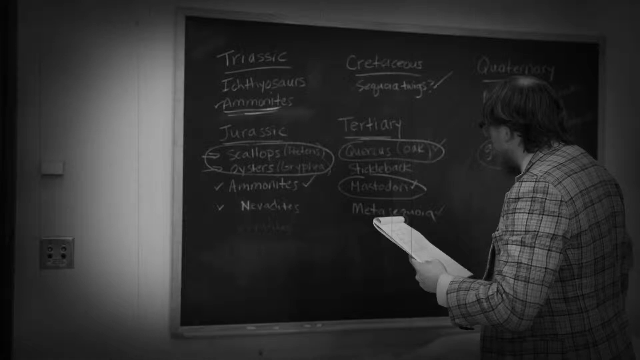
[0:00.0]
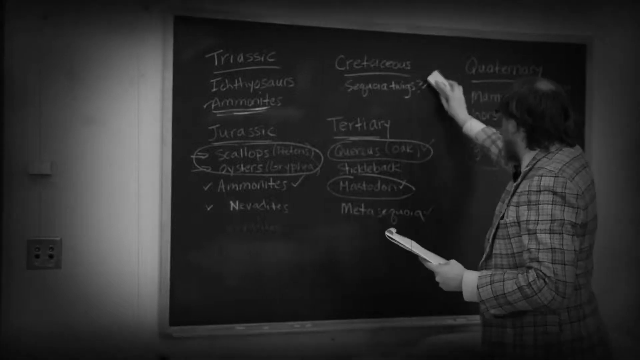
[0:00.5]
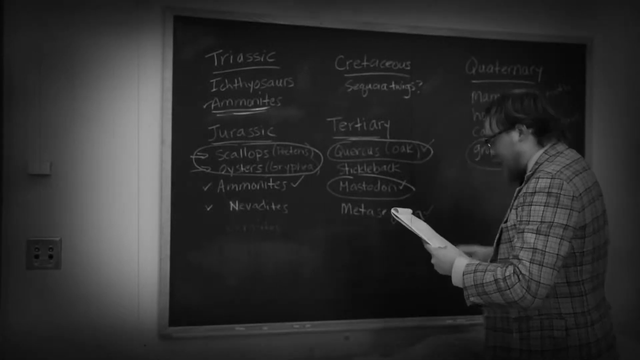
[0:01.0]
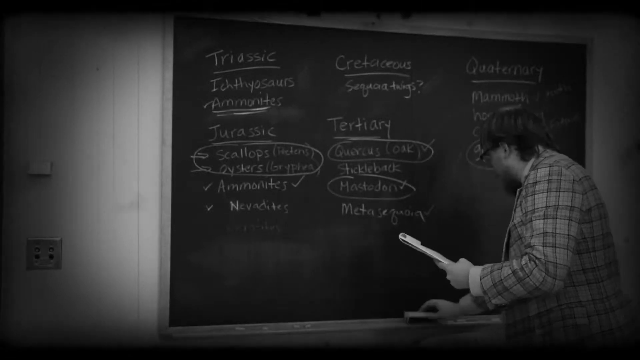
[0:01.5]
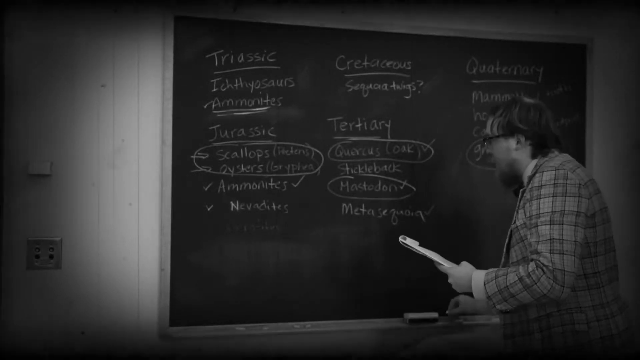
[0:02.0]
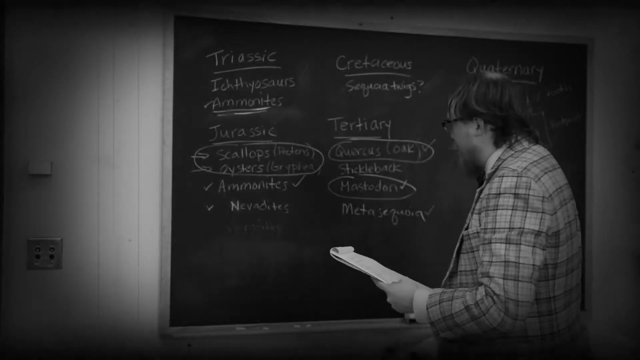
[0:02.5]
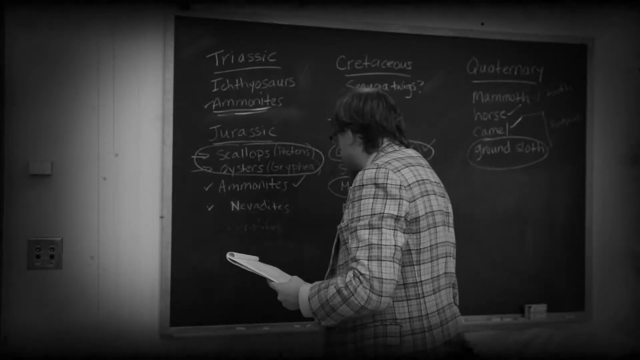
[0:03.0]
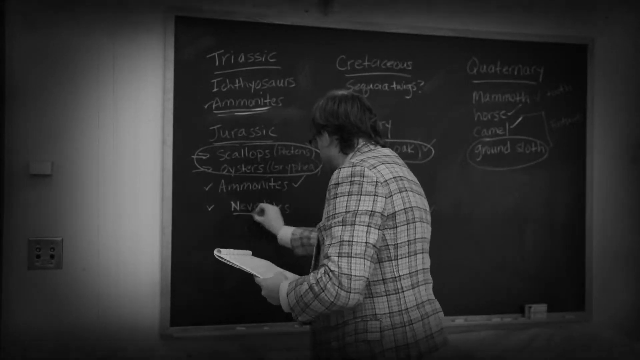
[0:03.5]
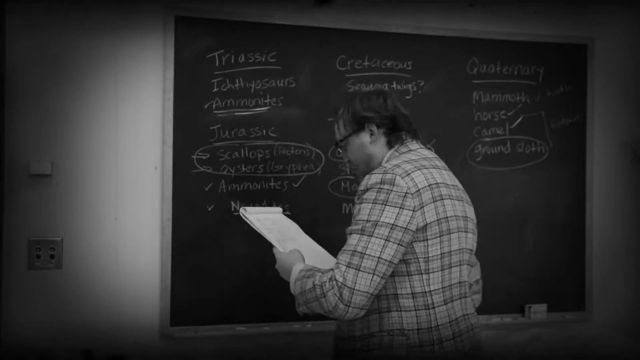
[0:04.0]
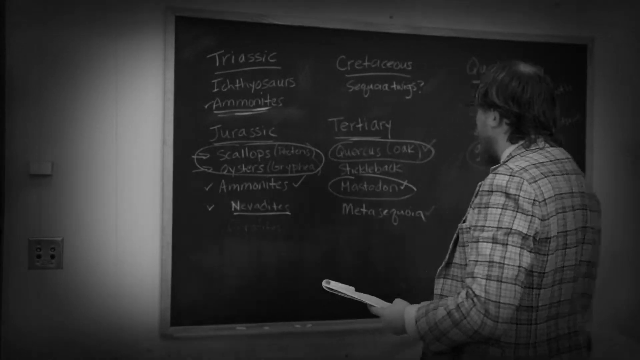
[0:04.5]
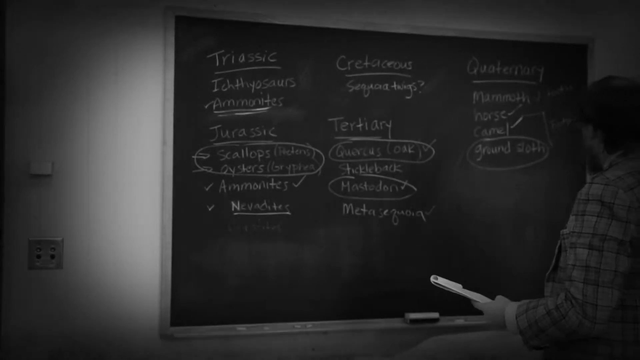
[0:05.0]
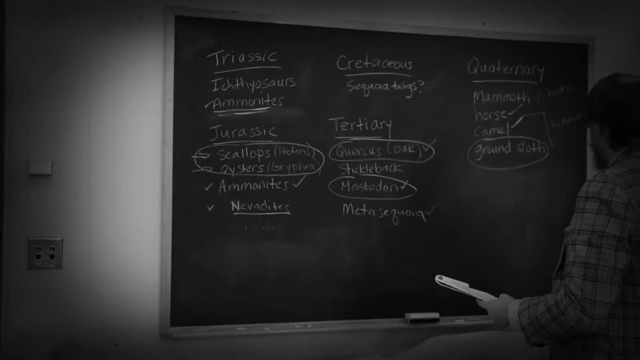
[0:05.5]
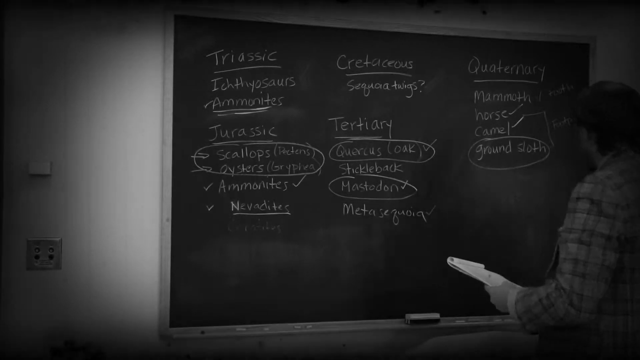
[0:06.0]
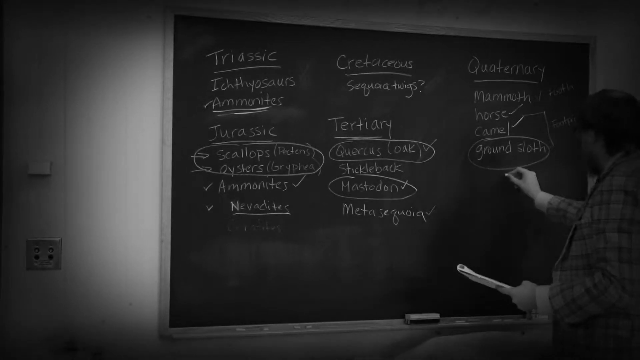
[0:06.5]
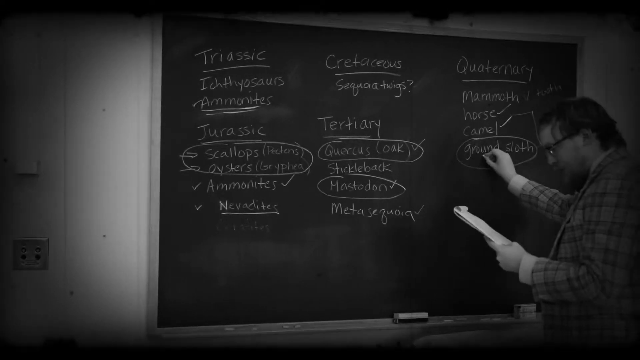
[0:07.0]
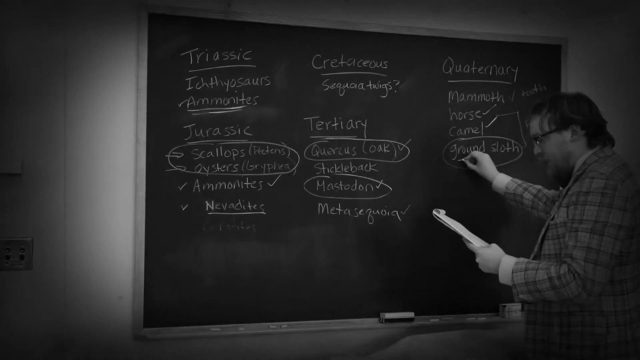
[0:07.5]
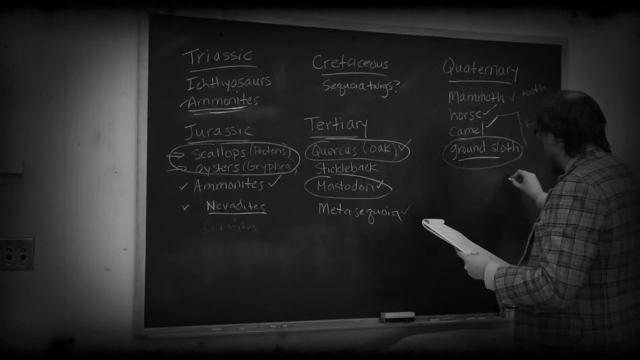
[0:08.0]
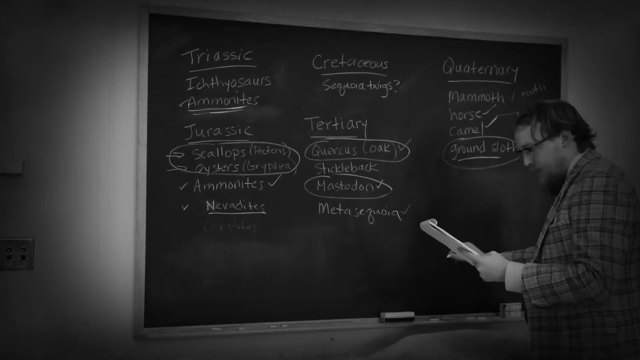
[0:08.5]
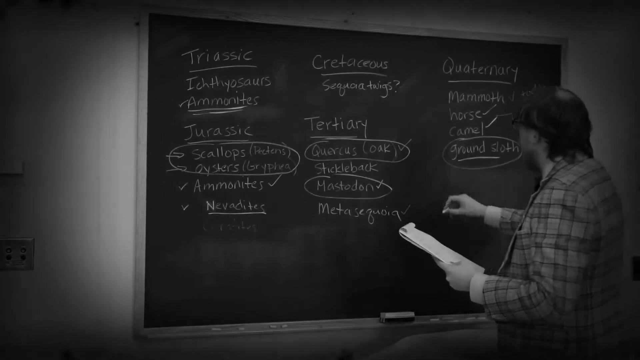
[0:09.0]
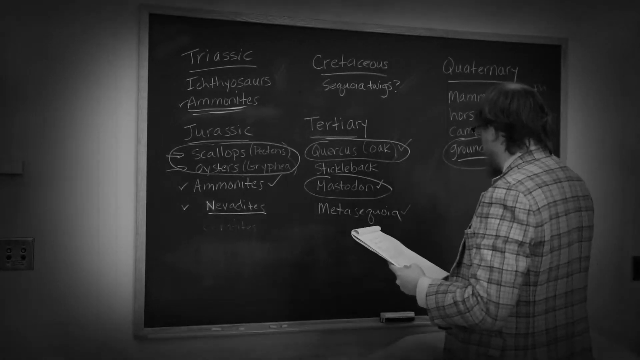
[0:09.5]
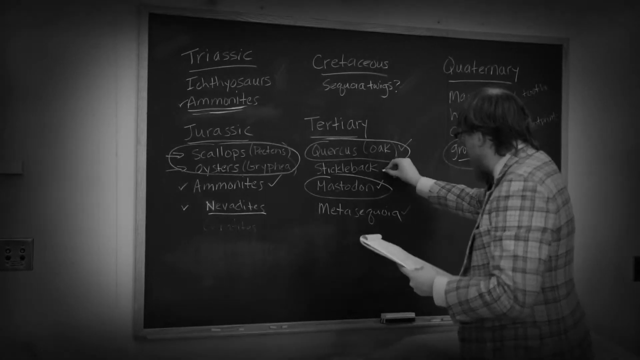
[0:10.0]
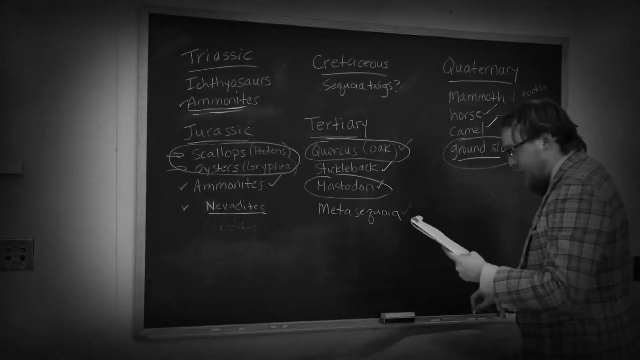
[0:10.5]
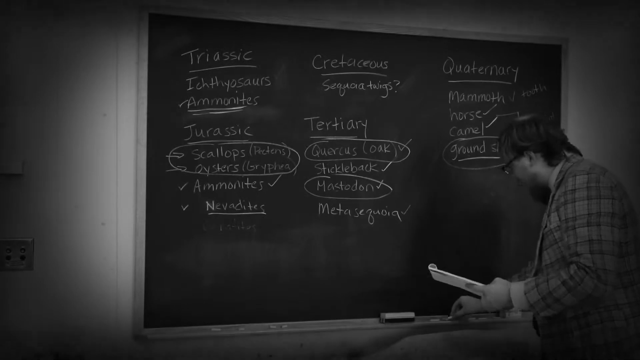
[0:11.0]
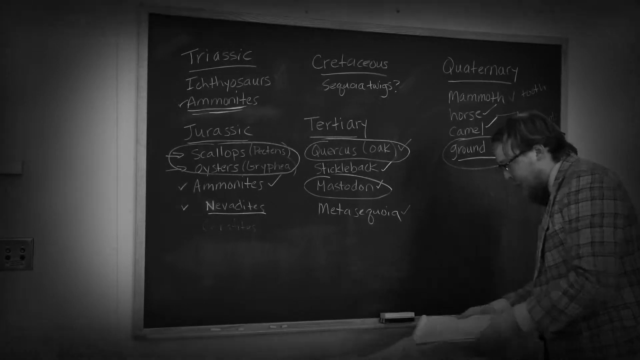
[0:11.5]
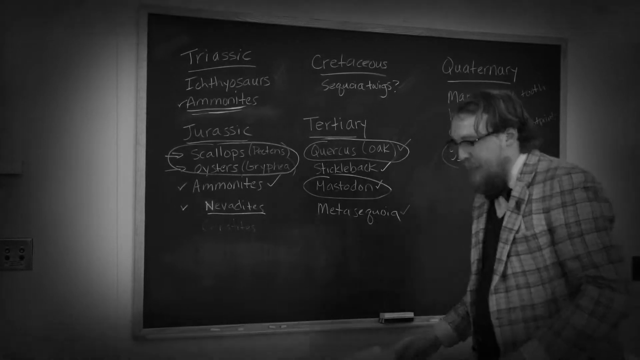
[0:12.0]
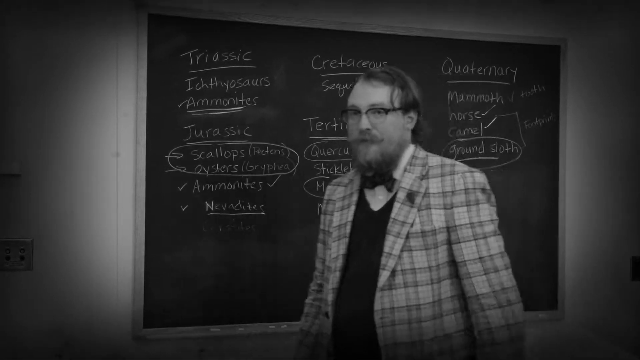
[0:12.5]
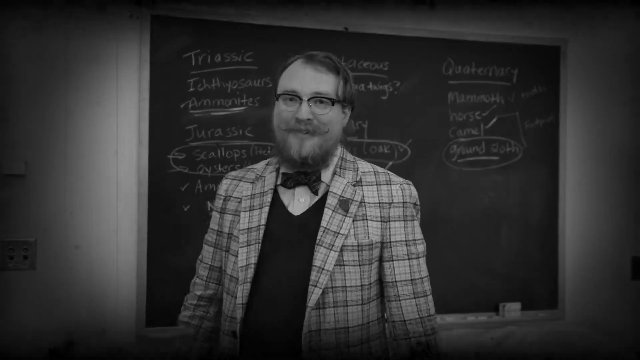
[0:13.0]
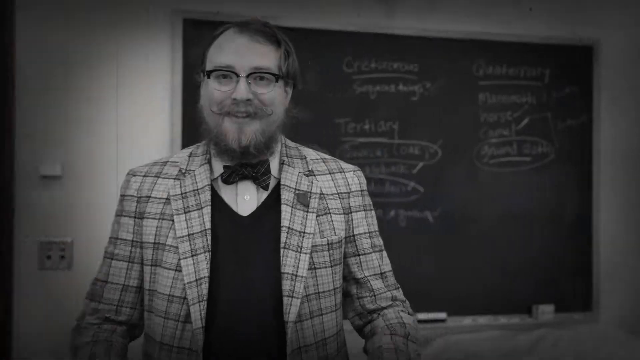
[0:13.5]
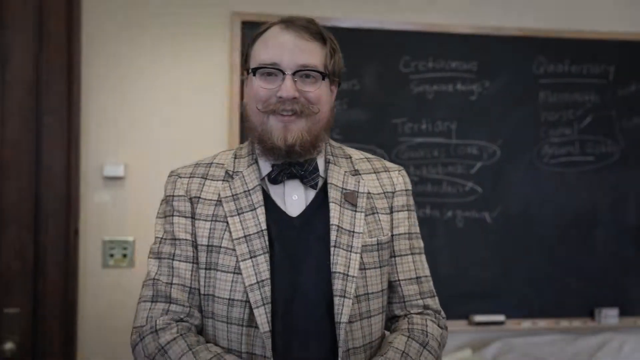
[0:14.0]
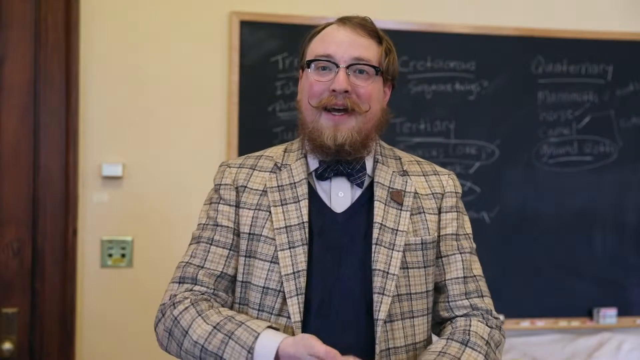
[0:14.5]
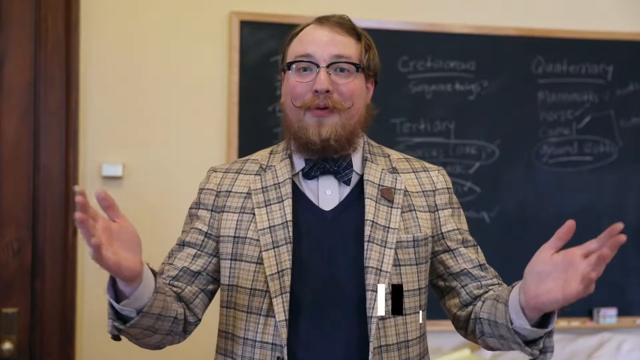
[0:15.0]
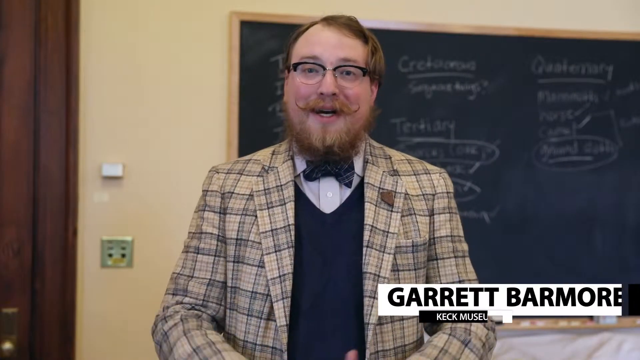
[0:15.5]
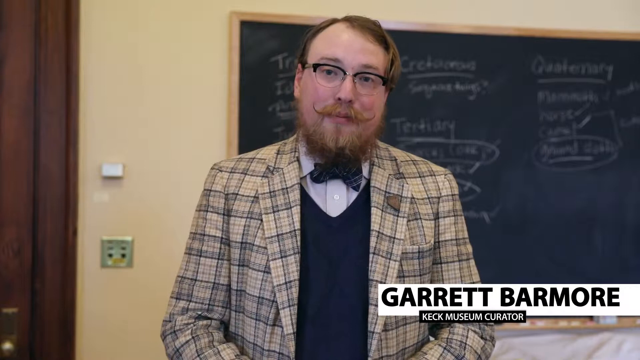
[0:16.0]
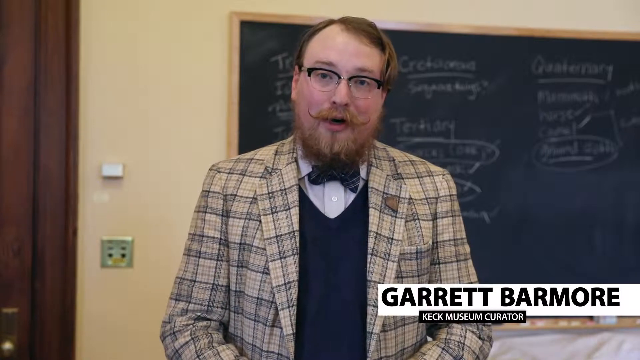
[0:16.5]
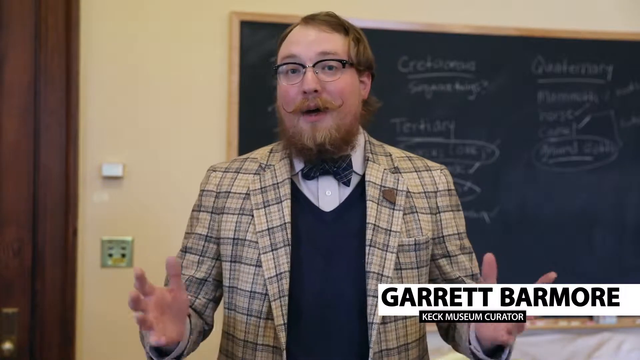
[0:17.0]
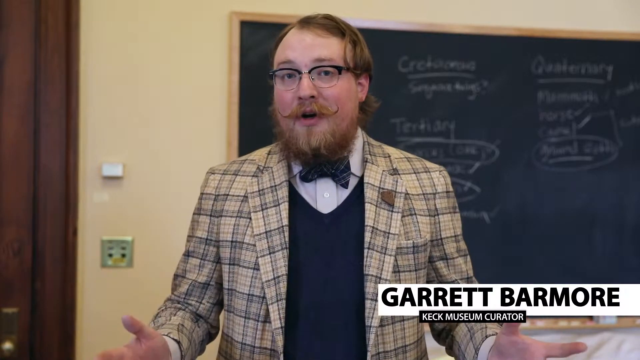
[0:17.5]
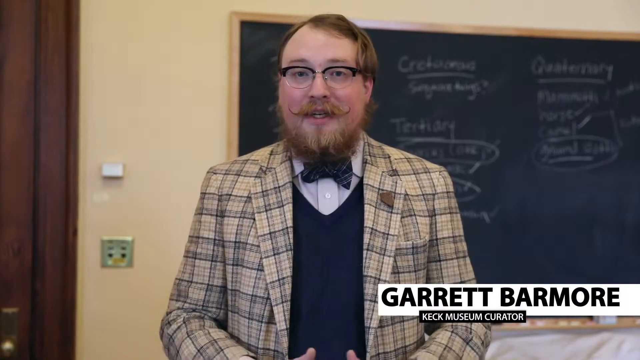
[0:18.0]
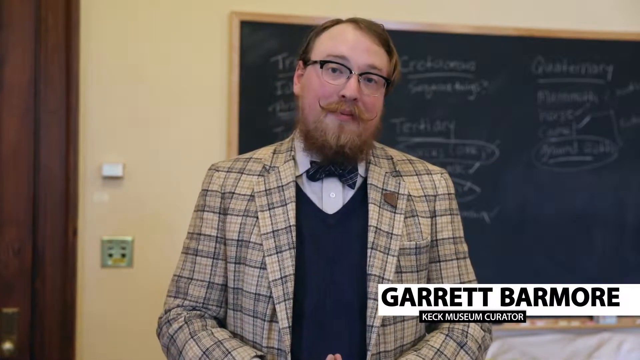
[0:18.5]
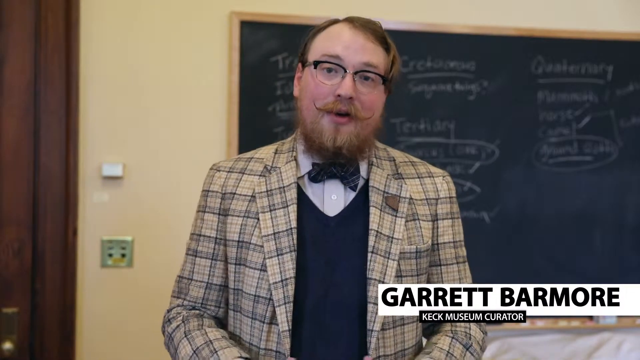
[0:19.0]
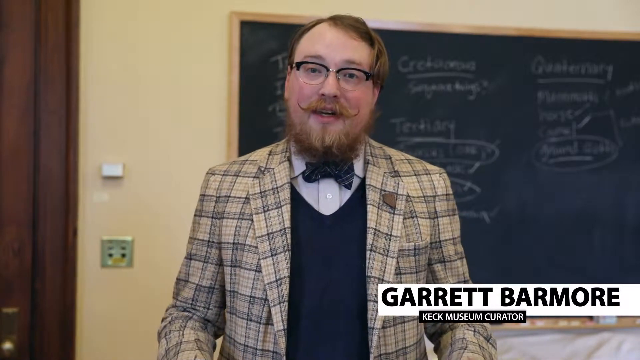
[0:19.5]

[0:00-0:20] The video opens in black and white in a classroom. A blackboard is on the right-hand side of the screen, and on the left-hand side is a wall with an electrical socket and a light switch. On the right stands a middle-aged man in a checked tweed jacket and a white shirt. He wears black-rimmed spectacles and has dark hair with a bald spot on top of his head; he also has a slight beard and black, wavy, shoulder-length hair. He holds a pad of paper in his left hand and writes in chalk on the board with his right. The board already lists species of fossils found in various geological periods. Working from top left clockwise to the right: "Triassic", underlined, with "Ichthyosaurus" and "Ammonites" underlined beneath it; in the middle, "Cretaceous" with a word beginning "Sequioia-" and unclear text beneath it; in the right-hand corner, "Quaternary" with "Mammoth", "Horse" and "Camel" beneath it. Back on the left, in the middle, is "Jurassic" with "Scallops", "Oysters", "Ammonites" and "Nevadites" beneath it, and in the middle is "Tertiary" with "Quercus (Oak)", "Stickleback", "Mastodon" and "Metasequoia". The man adds "Ground Sloth" beneath "Mastodon". He turns to face the camera, revealing a stripy black and grey bow tie, a black sweater and a moustache curled up at the ends. The video turns to colour as the man continues talking to the camera.